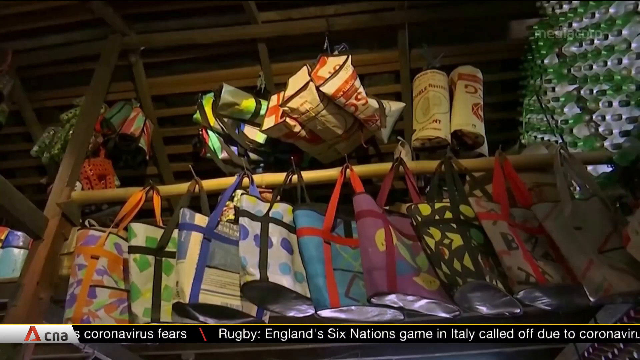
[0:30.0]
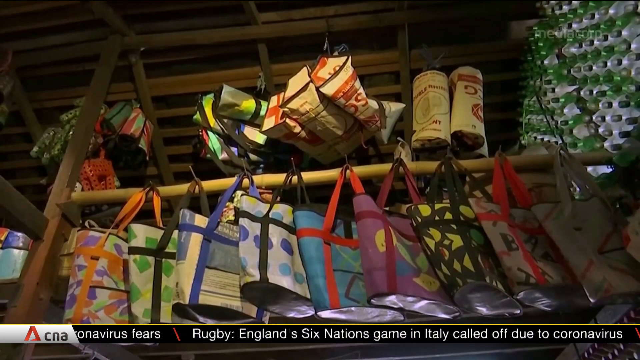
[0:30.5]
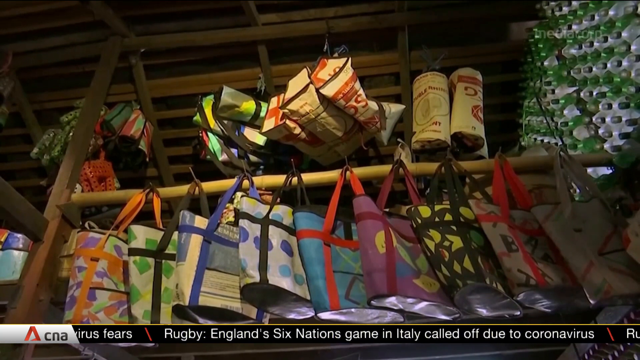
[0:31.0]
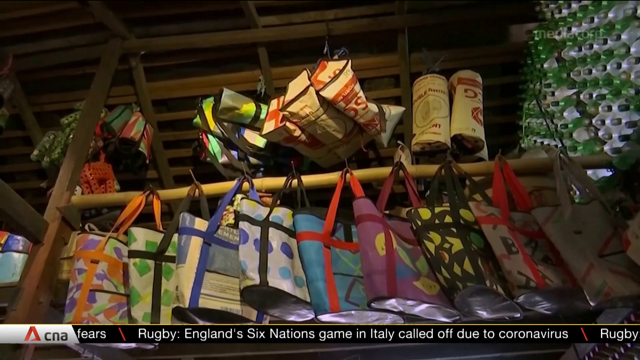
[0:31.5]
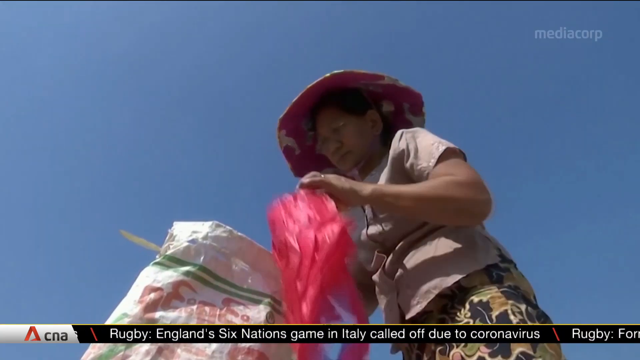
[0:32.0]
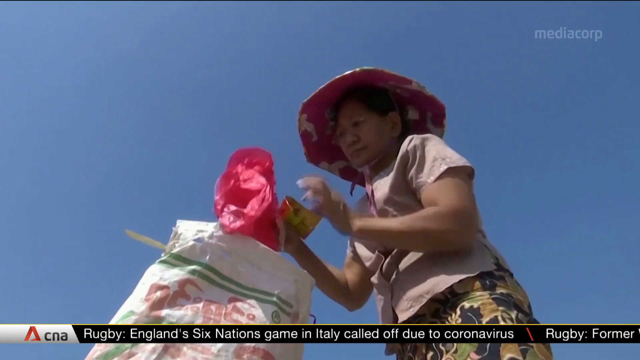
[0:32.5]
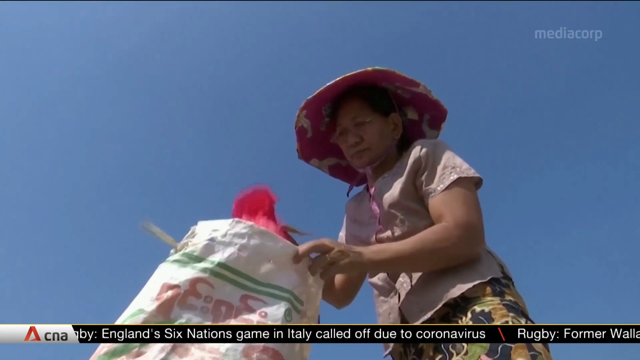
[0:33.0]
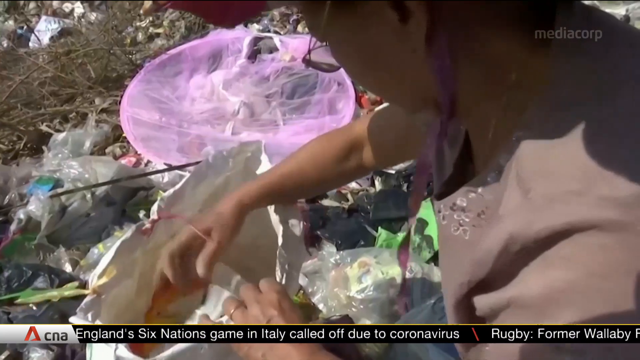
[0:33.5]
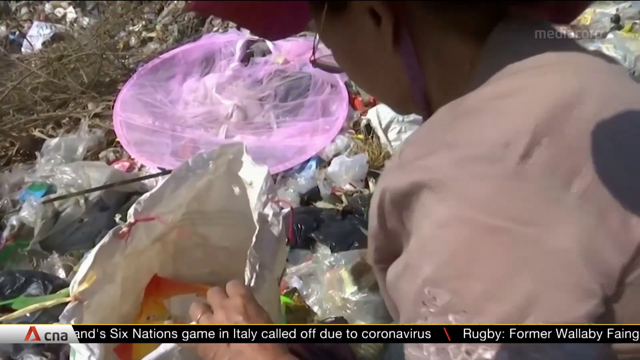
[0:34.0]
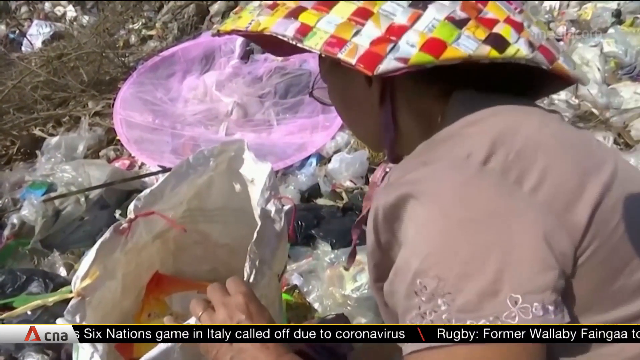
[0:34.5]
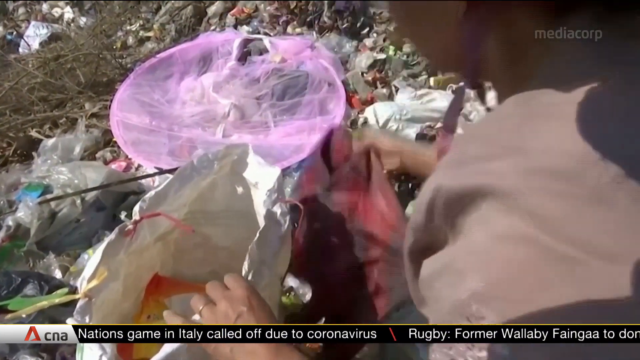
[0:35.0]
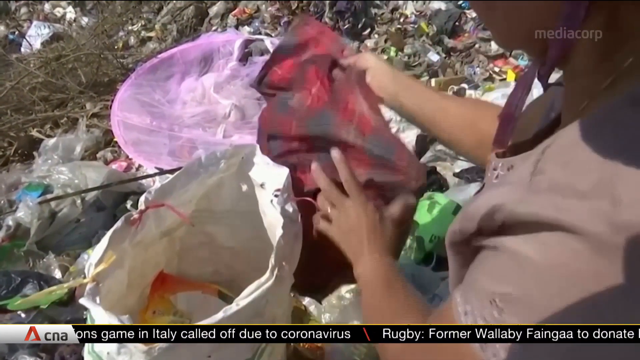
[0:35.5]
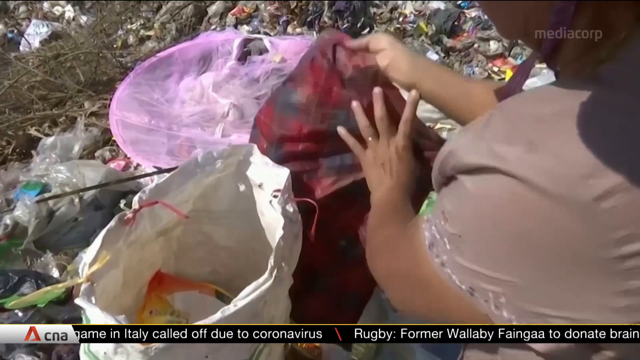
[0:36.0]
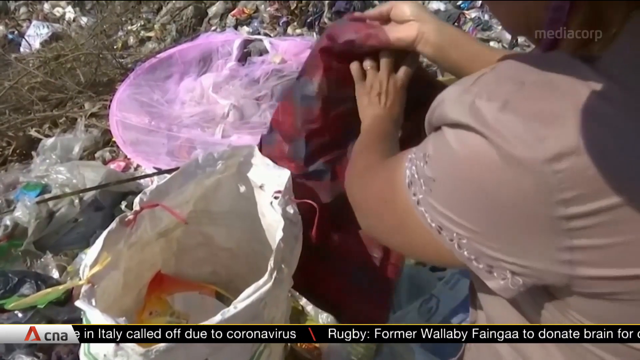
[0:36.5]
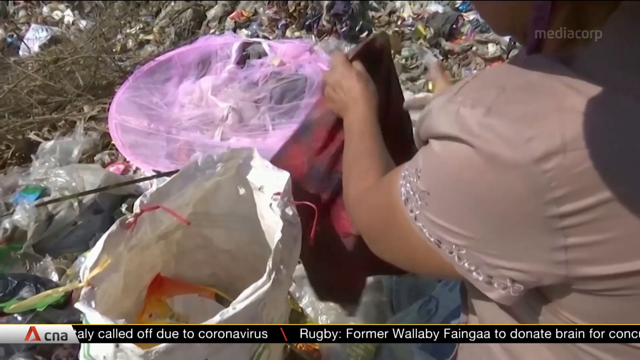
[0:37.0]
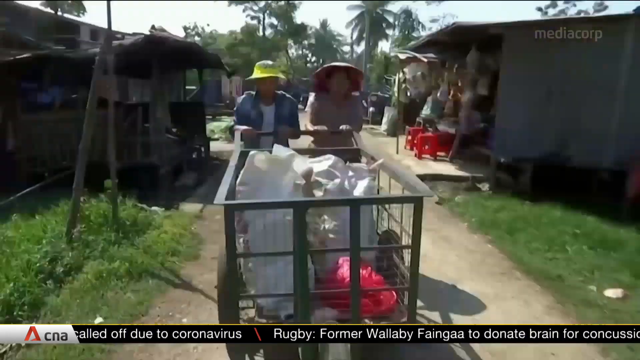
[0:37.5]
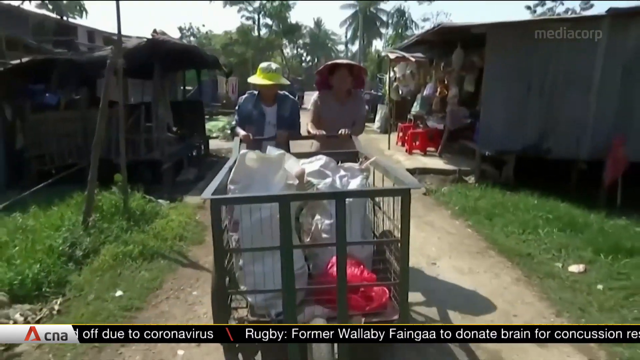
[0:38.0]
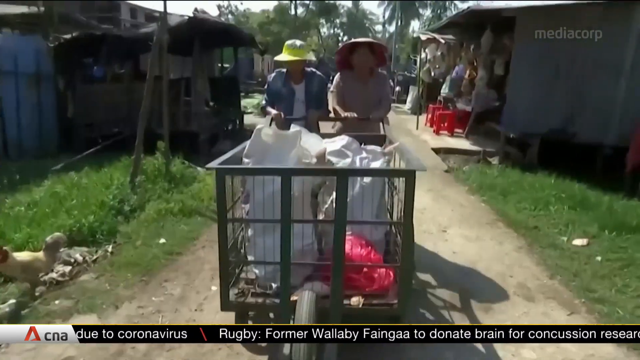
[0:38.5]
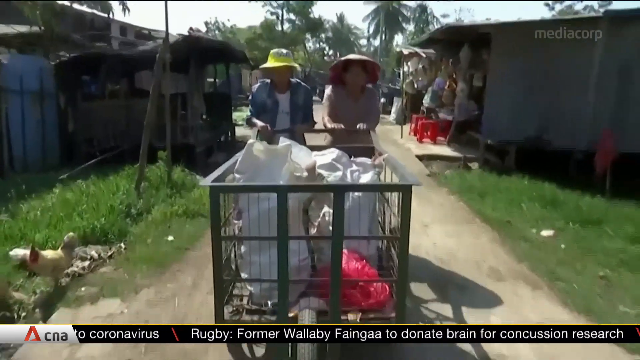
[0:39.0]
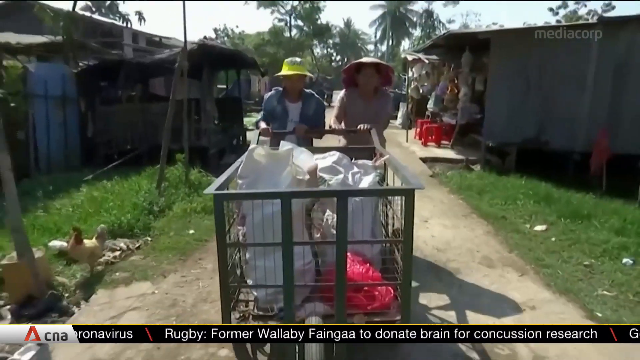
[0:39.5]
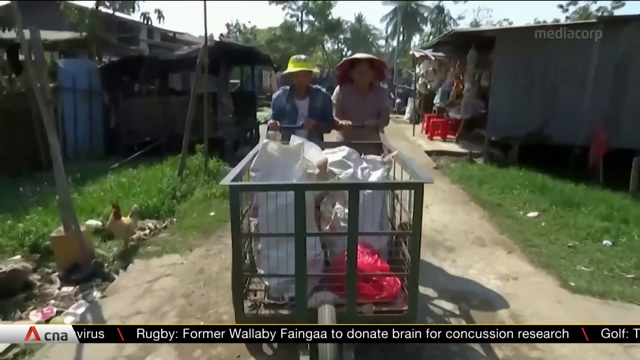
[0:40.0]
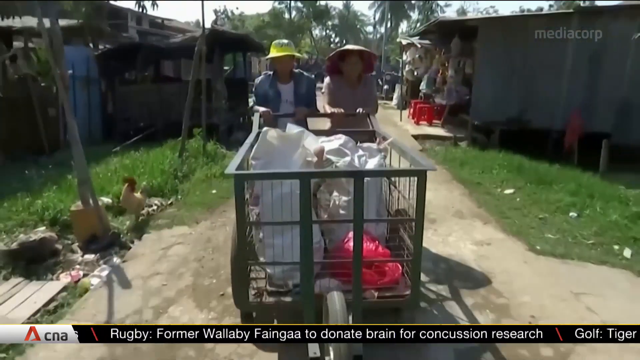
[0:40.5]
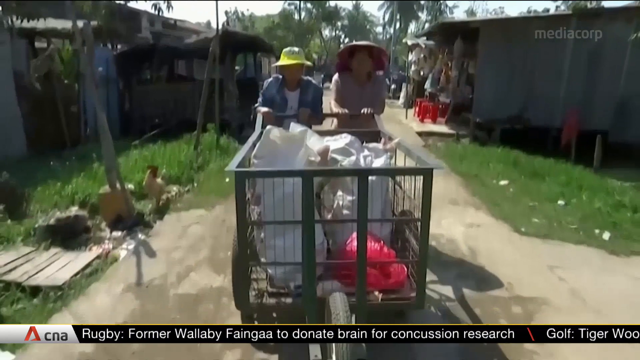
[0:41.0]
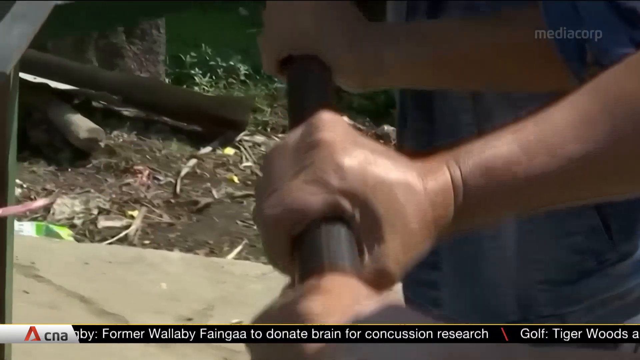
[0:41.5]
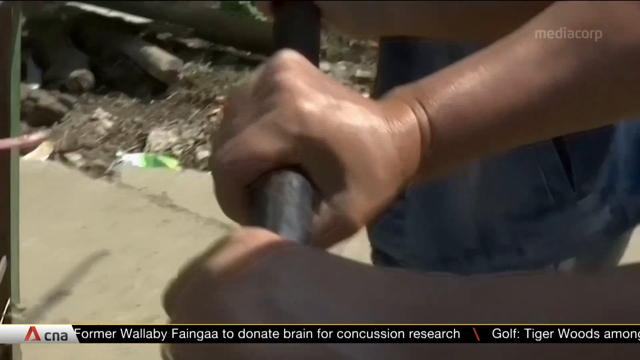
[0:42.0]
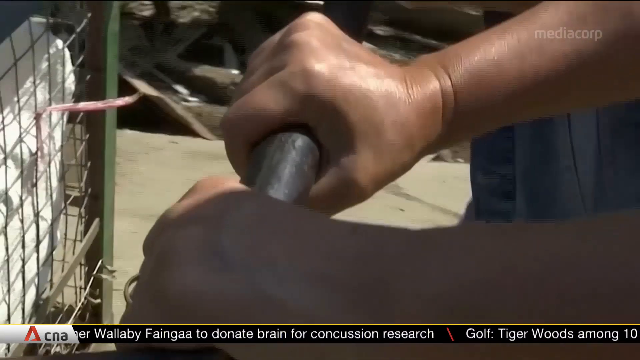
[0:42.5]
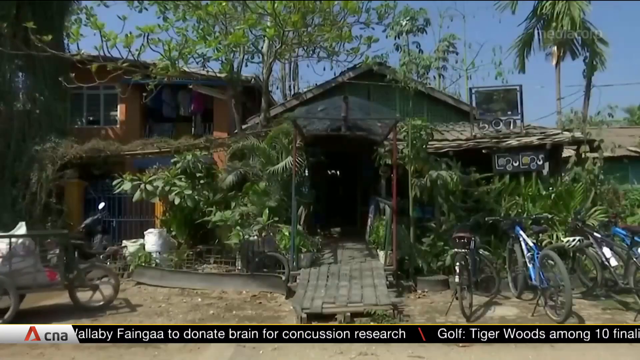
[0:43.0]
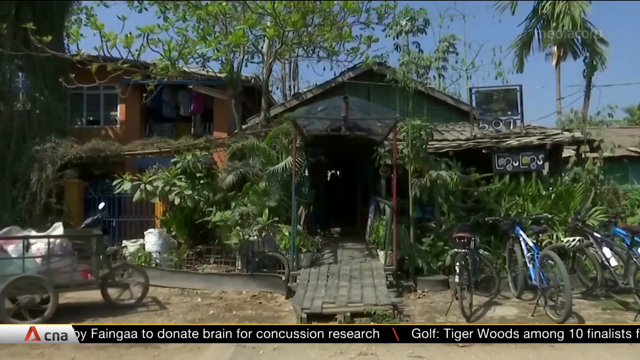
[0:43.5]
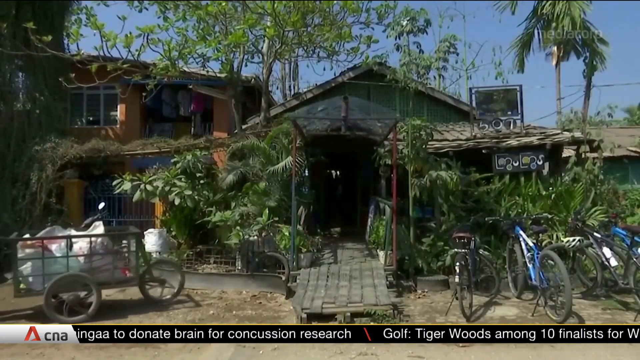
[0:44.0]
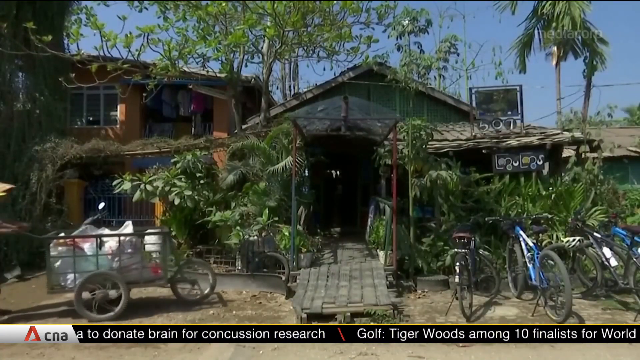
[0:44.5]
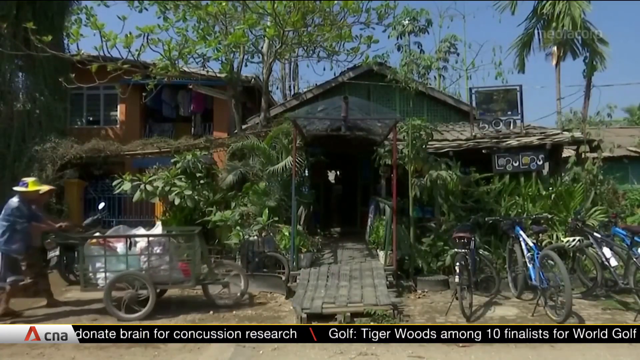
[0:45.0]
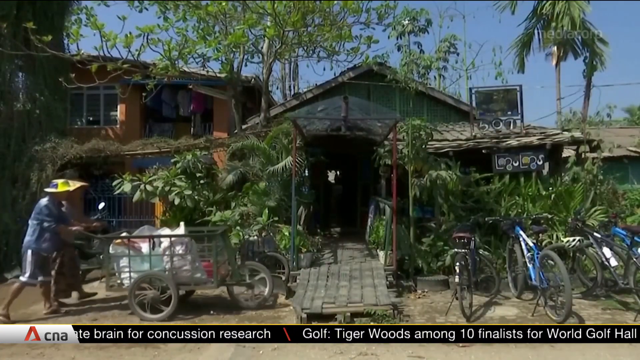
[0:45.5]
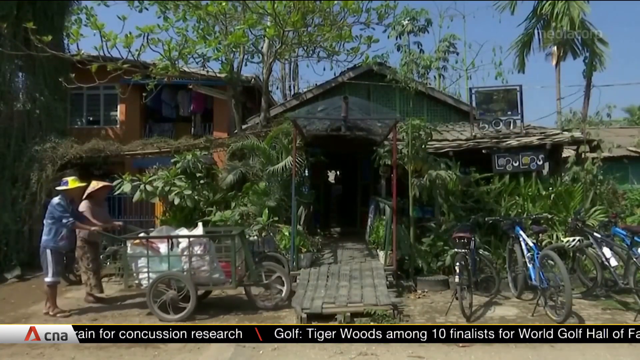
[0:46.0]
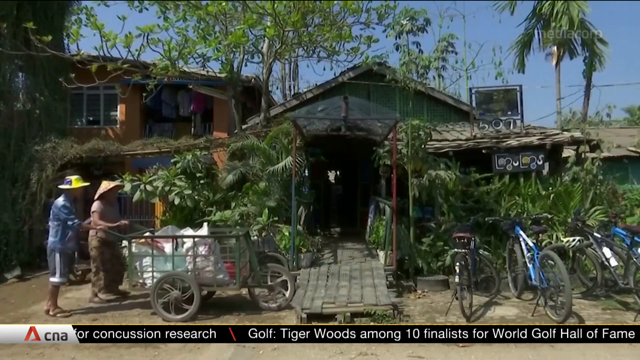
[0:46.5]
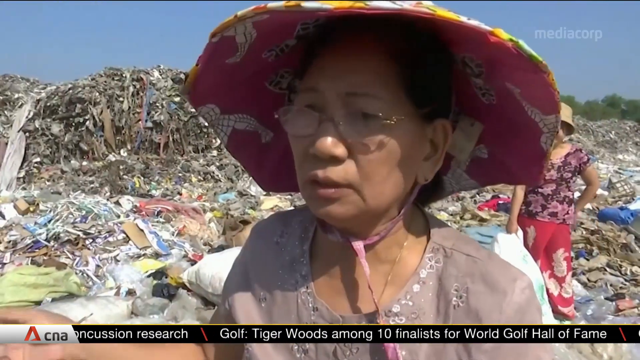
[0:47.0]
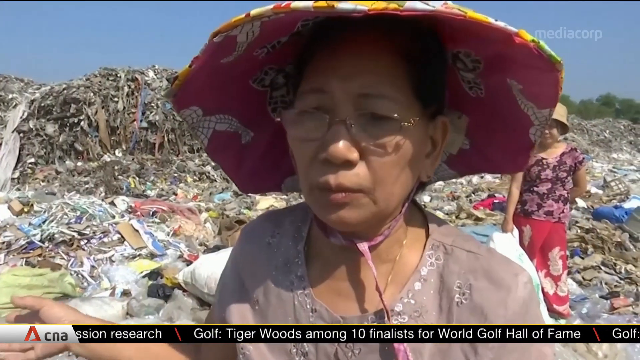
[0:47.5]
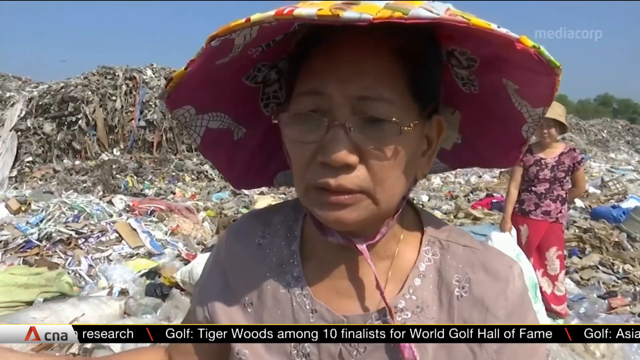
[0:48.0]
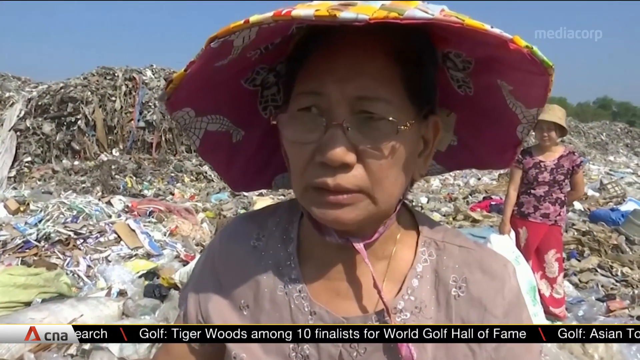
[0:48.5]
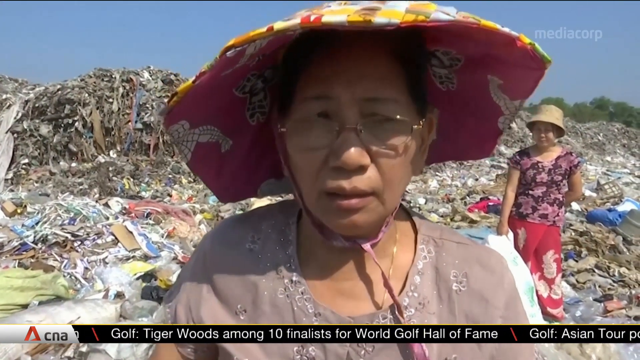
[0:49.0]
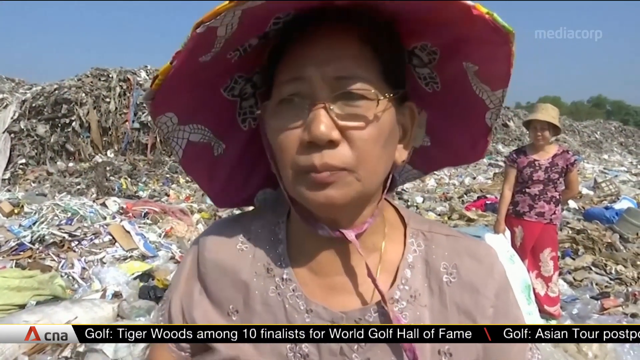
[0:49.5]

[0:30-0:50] A market appears where clothes or bags are being sold, with bags hanging up in many colors, including orange, red and green. The video then changes to the lady in the street at the place where rubbish is put. She and others pick up rubbish into a bag, and then they take the rubbish away. They enter what seems to be a house or home, with a lot of blue bicycles outside. The lady who was picking the rubbish is still at that place, with a lot of rubbish around, and she speaks to the camera; there are possibly journalists there asking them questions.